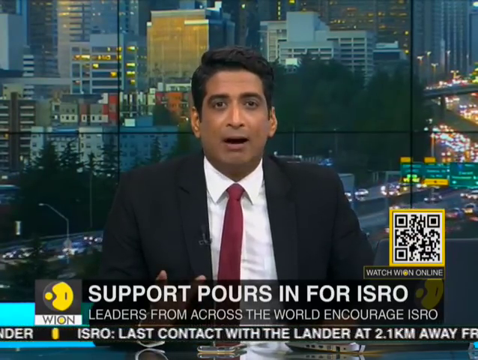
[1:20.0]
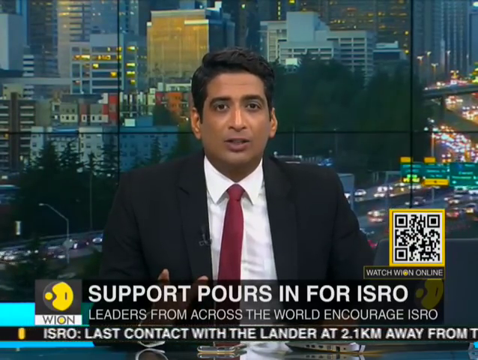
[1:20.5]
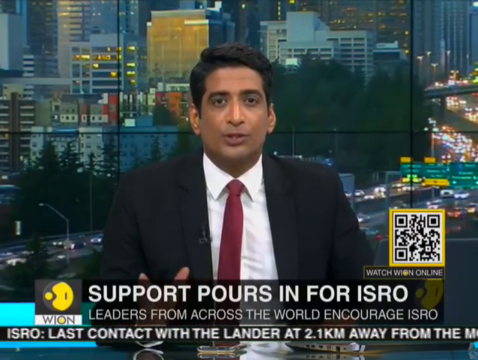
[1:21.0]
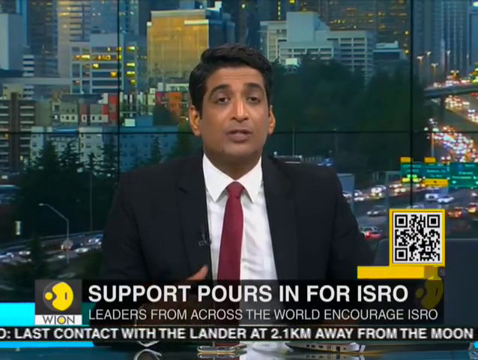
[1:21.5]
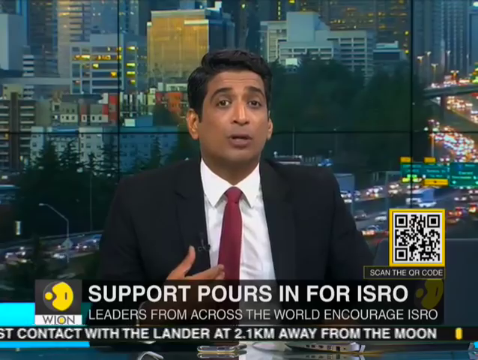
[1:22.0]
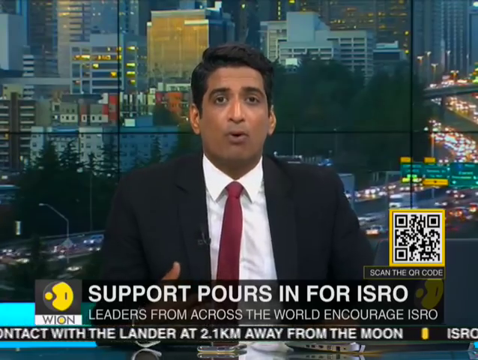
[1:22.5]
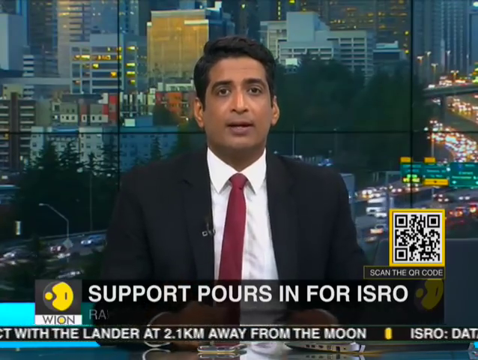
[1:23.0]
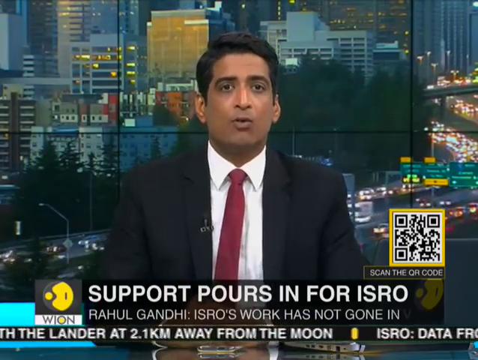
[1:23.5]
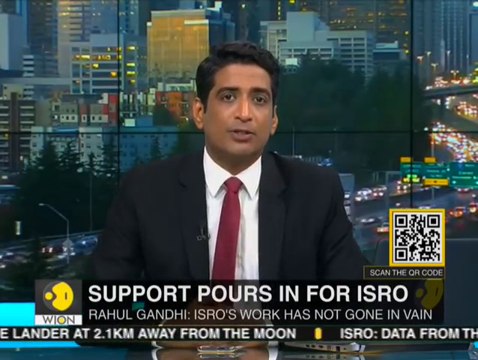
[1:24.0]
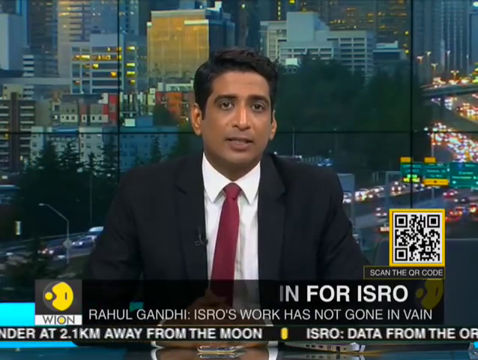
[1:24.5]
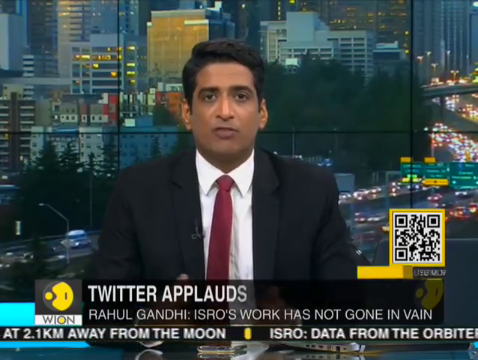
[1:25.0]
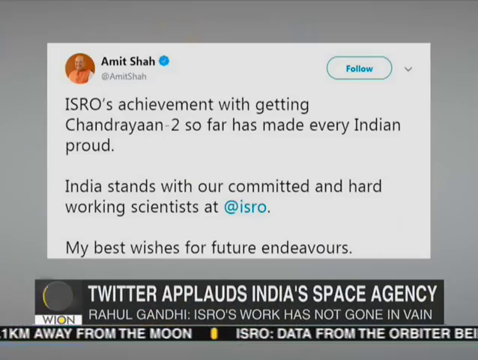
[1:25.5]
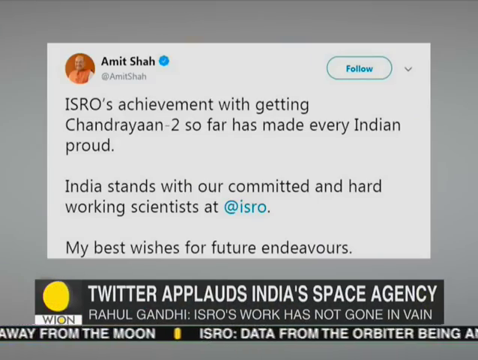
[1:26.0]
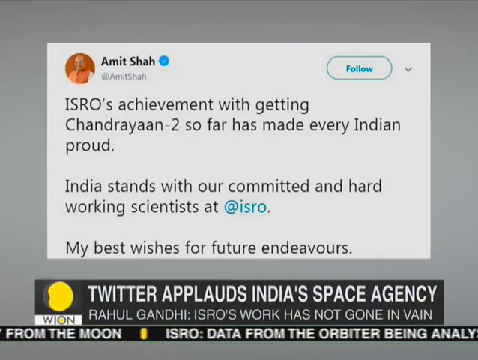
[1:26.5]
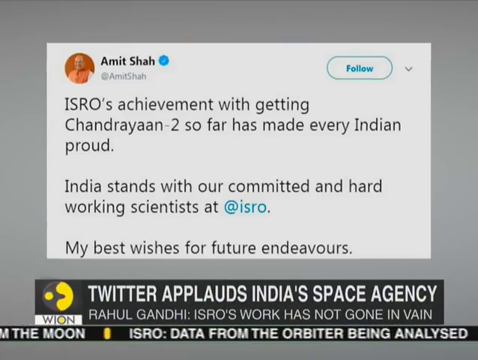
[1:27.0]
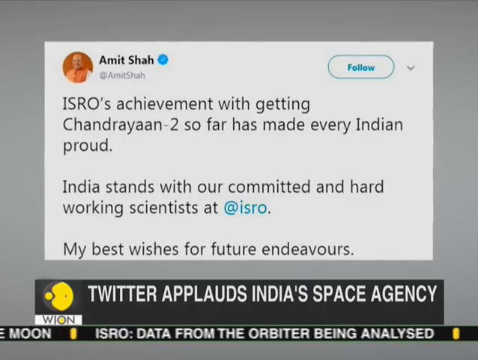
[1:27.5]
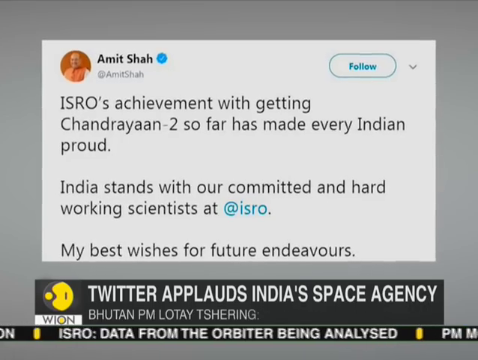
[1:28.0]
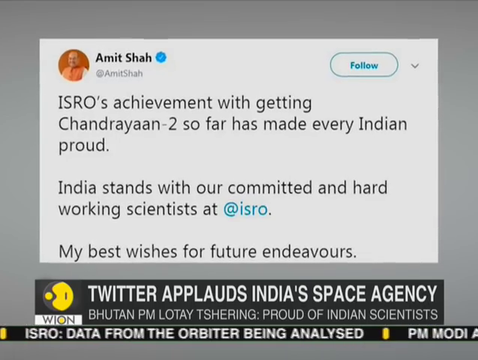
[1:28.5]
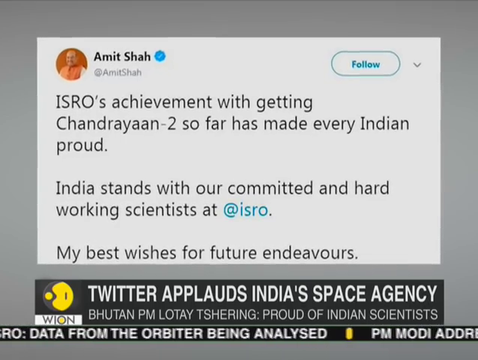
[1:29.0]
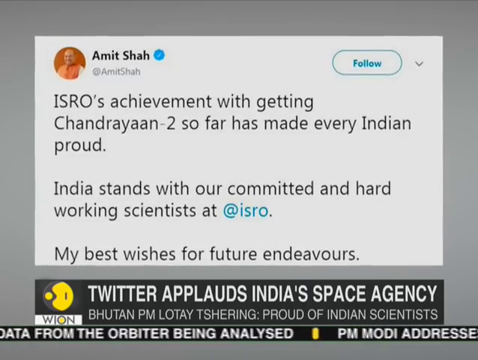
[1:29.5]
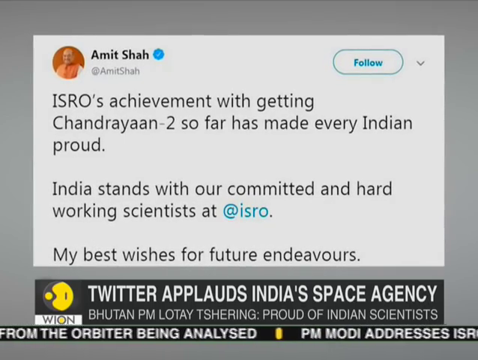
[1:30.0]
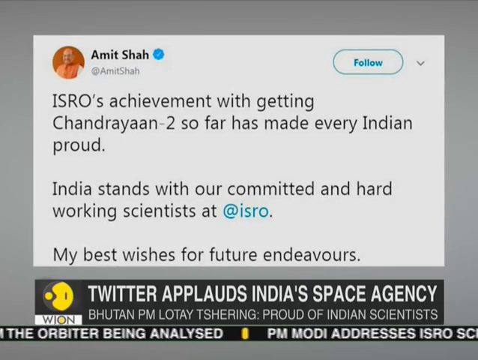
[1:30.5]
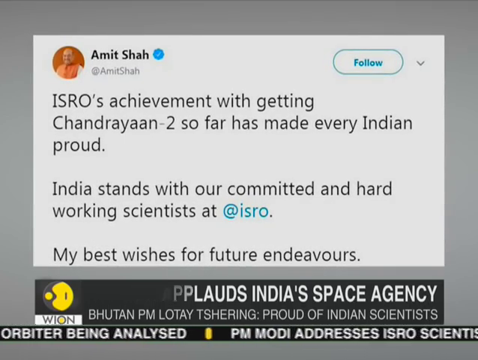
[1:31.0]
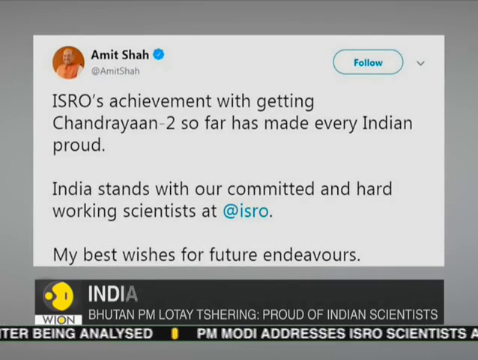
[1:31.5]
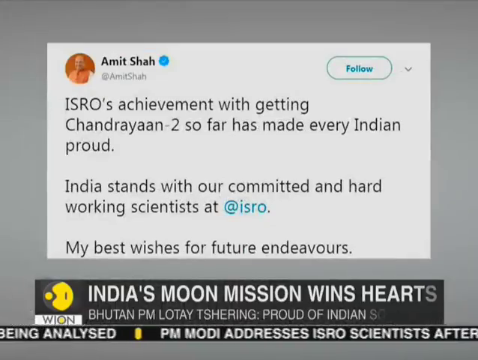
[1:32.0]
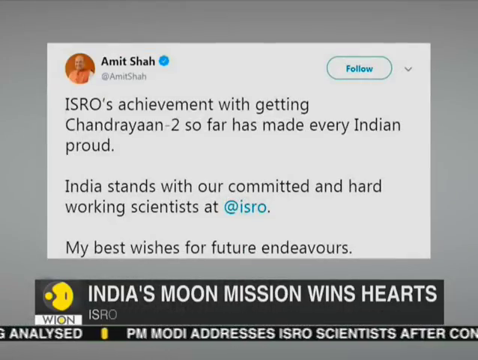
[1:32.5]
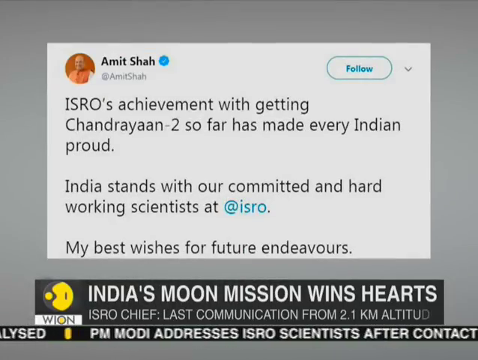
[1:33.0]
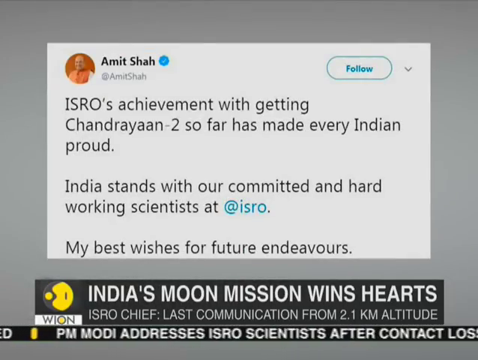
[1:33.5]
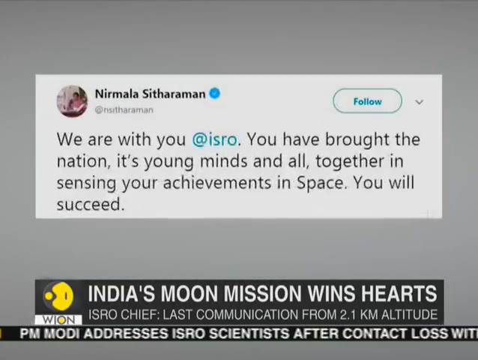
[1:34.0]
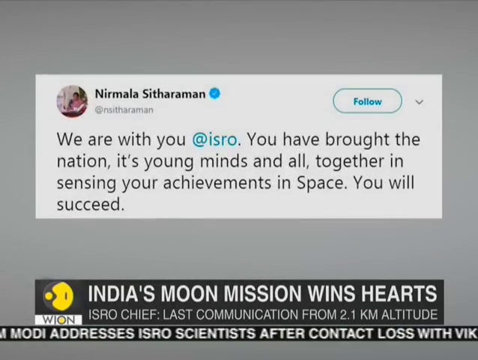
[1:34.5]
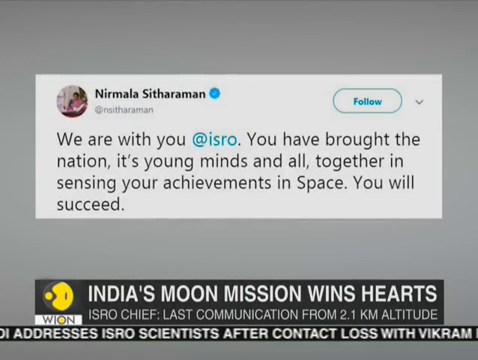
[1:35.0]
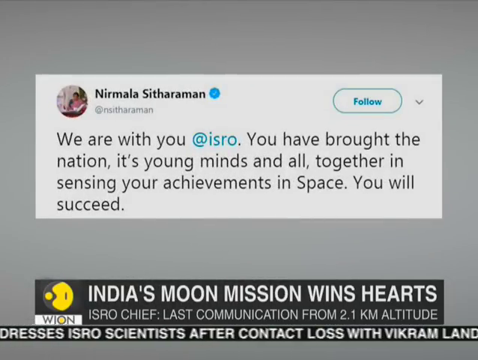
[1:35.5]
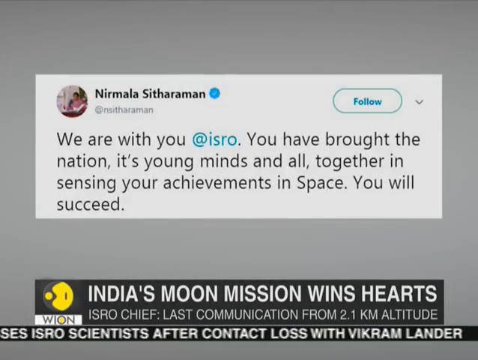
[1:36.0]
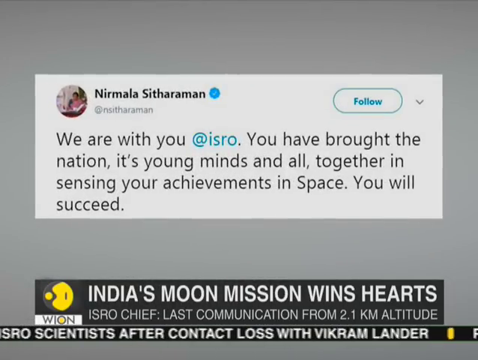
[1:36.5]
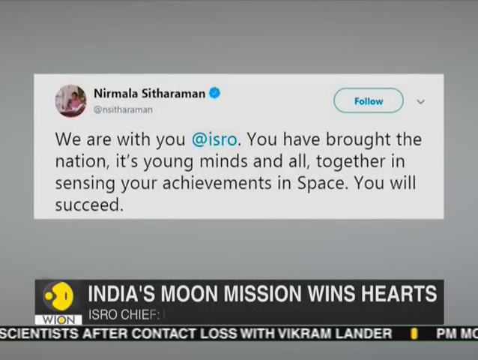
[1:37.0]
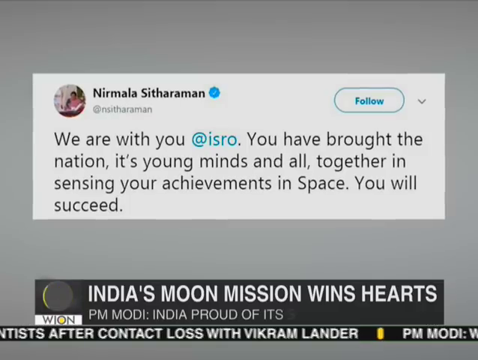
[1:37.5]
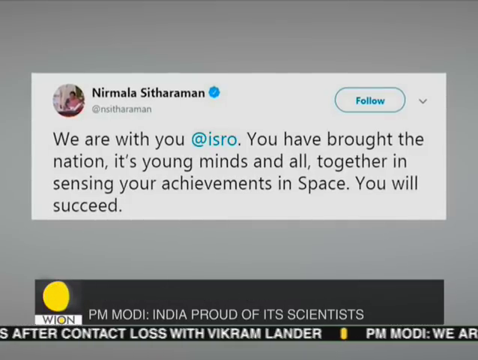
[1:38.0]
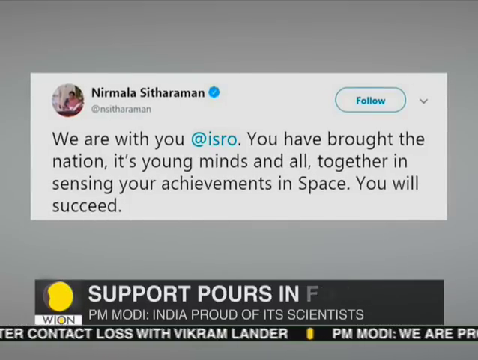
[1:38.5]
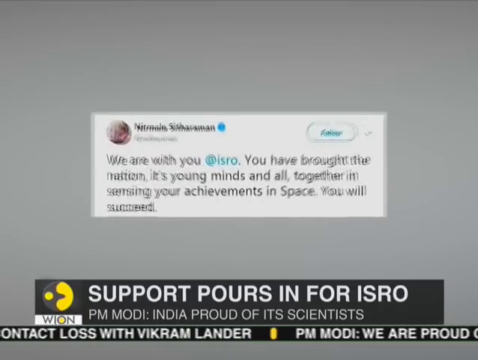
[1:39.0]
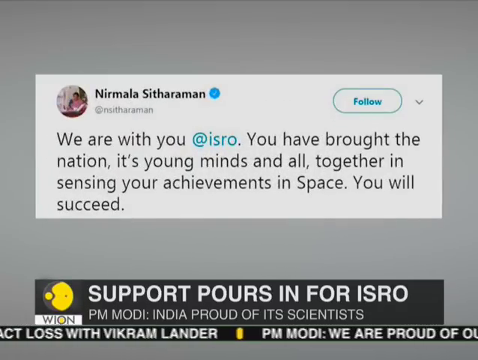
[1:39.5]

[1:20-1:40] The WION (World is One) News report about the Chandrayaan moon lander continues. Text shows Rahul Gandhi saying "ISRO's work has not gone in vain". Bhutan's PM Lote is shown sharing that he is "proud of Indian scientists". A tweet from Amit Shah reads: "ISRO's achievement with getting Chandrayaan 2 so far made every Indian proud. India stands with our committed and hard-working scientists at ISRO. My best wishes for future endeavors." Nirmala Sithmarathman tweeted: "We are with you @isro. You have brought the nation, its young minds and all, together in sensing your achievements in Space. You will succeed."